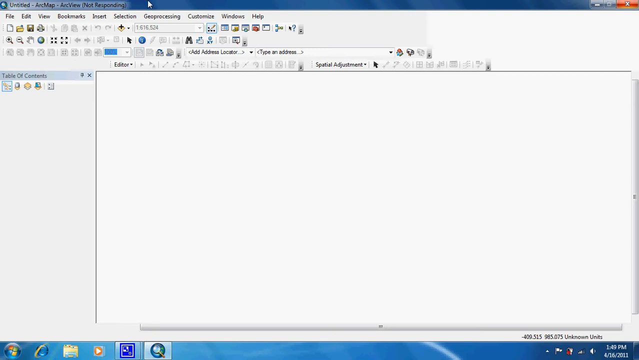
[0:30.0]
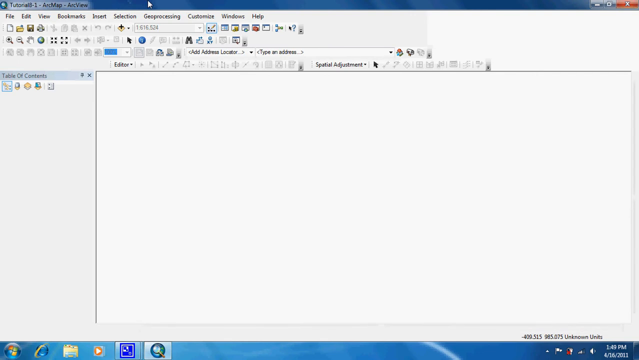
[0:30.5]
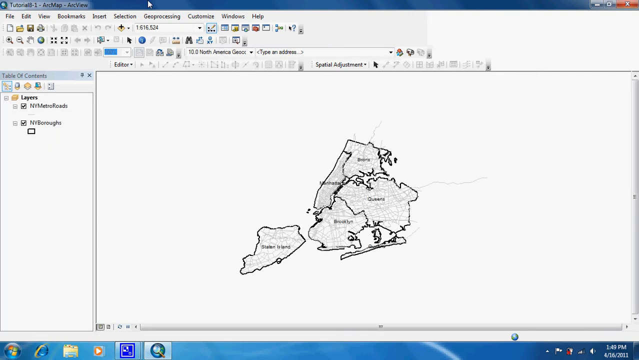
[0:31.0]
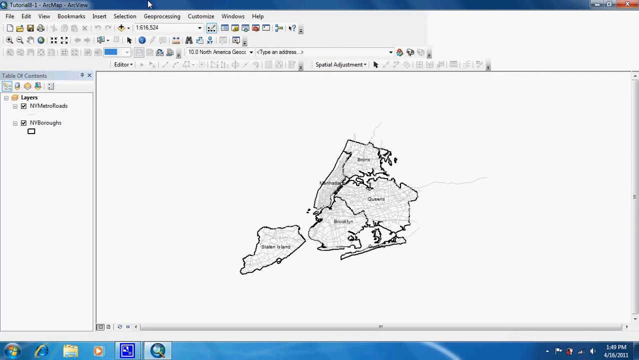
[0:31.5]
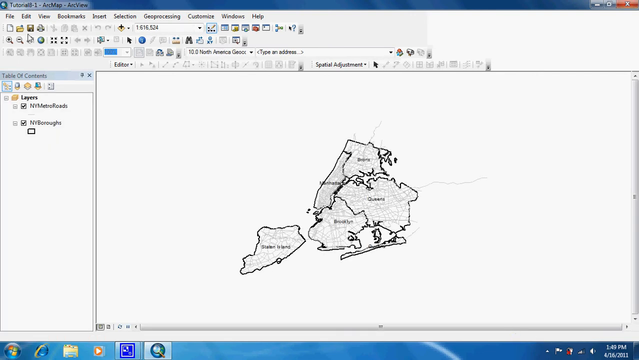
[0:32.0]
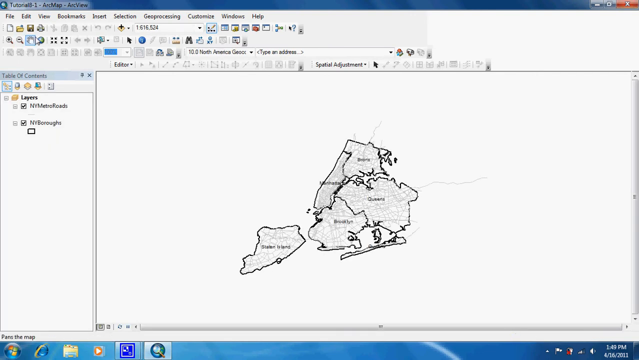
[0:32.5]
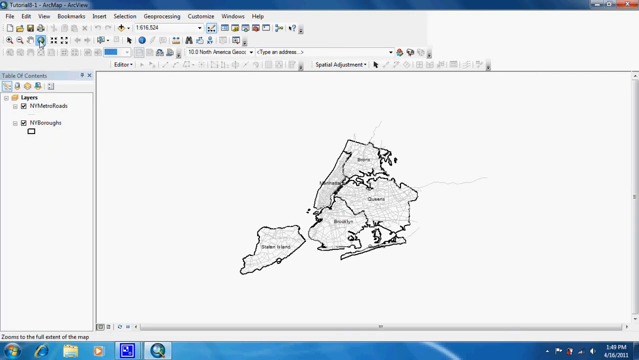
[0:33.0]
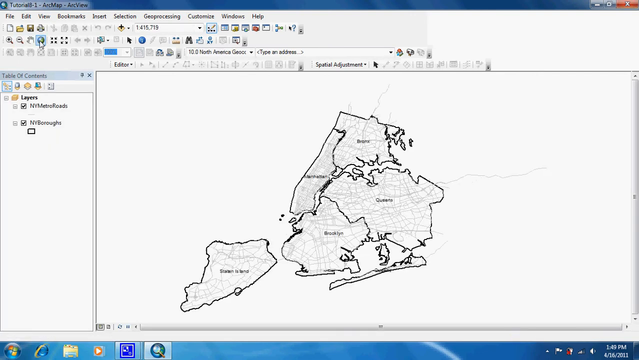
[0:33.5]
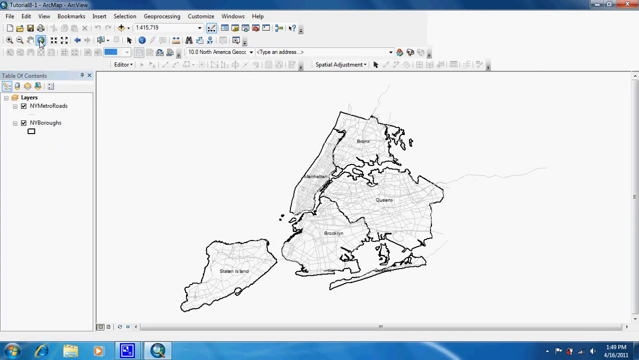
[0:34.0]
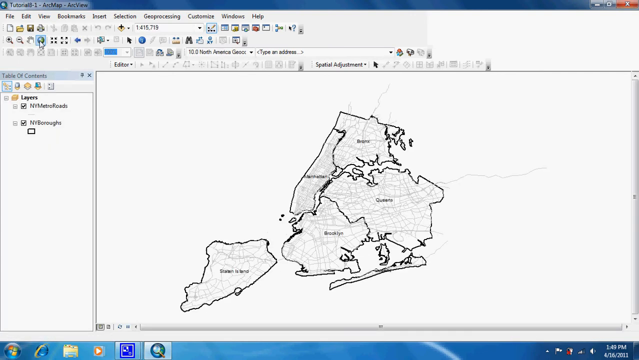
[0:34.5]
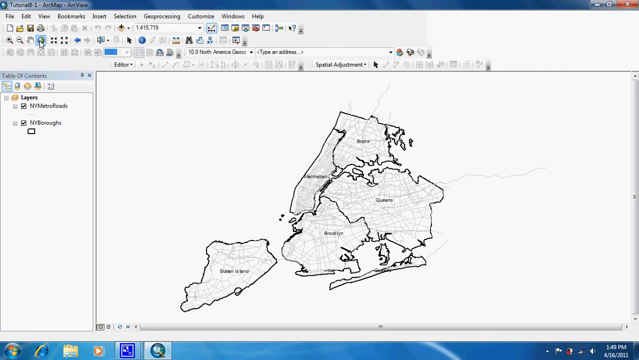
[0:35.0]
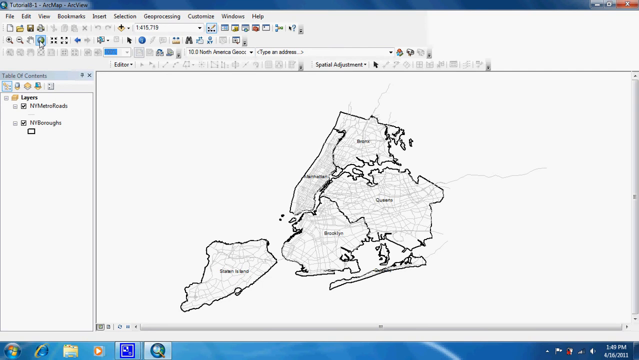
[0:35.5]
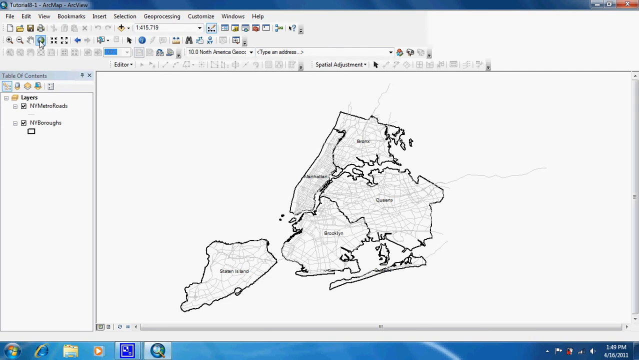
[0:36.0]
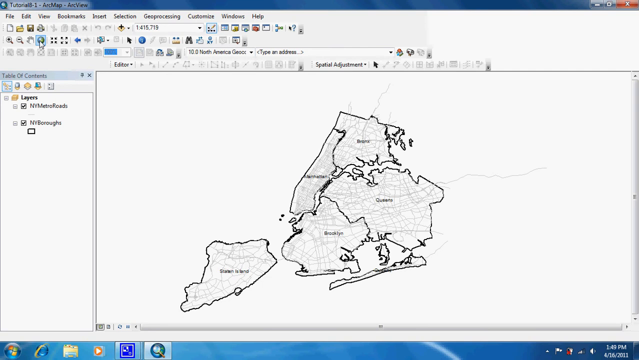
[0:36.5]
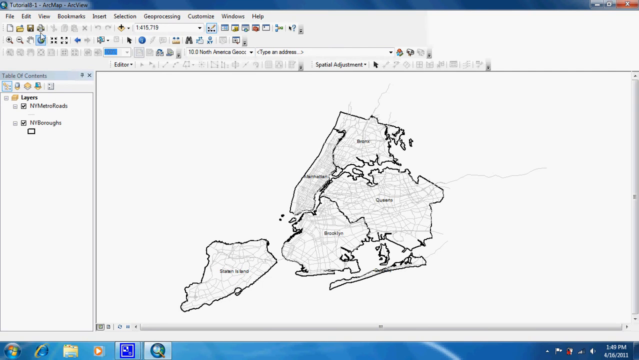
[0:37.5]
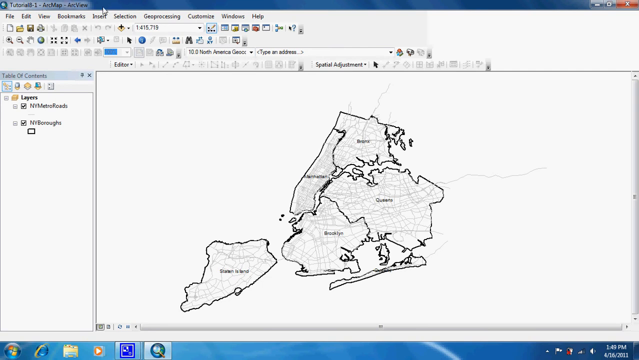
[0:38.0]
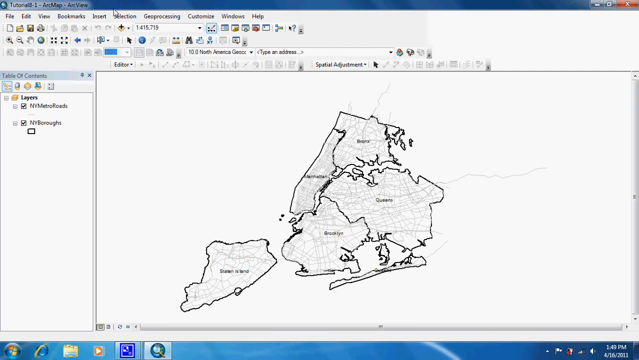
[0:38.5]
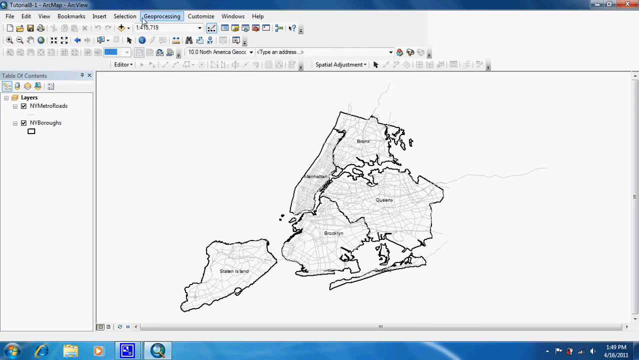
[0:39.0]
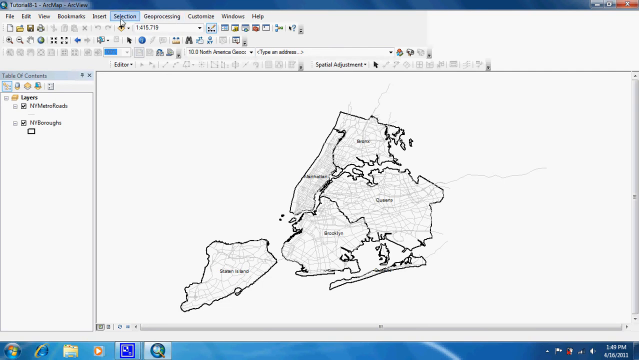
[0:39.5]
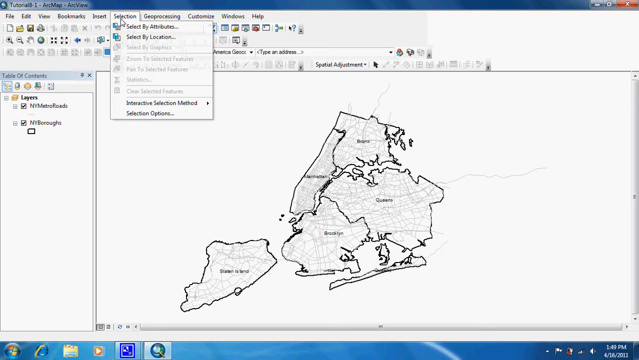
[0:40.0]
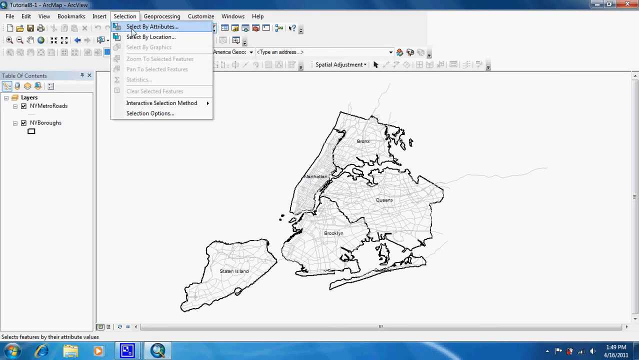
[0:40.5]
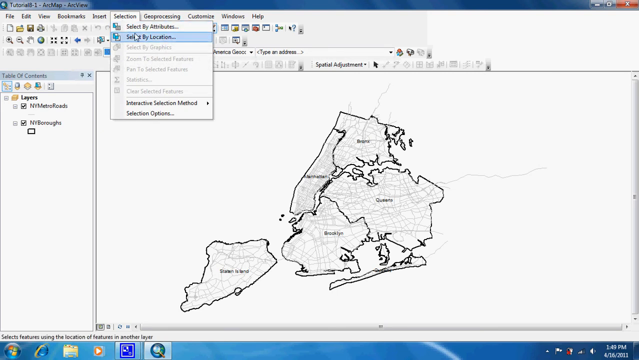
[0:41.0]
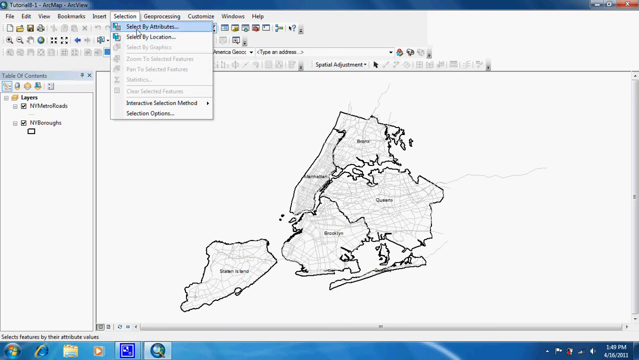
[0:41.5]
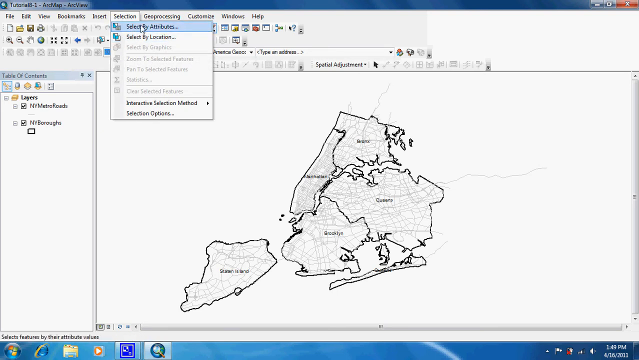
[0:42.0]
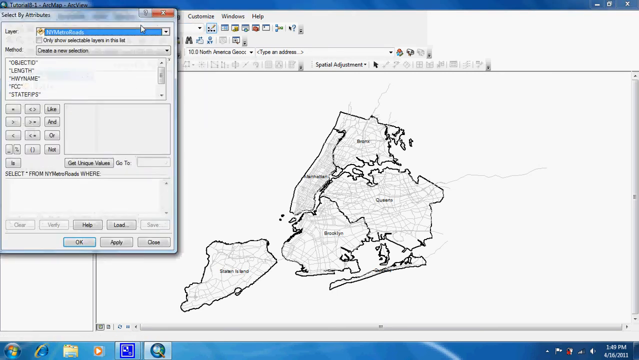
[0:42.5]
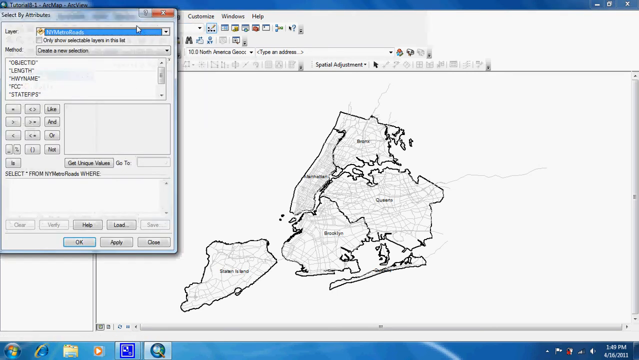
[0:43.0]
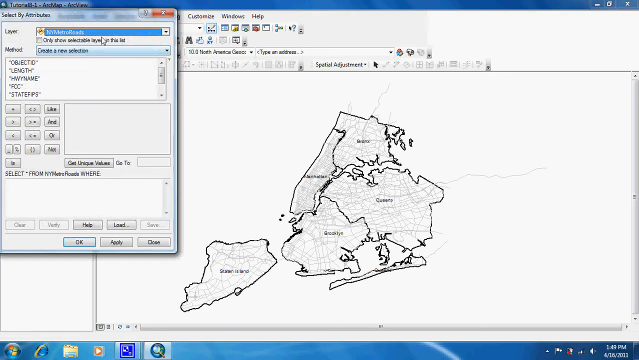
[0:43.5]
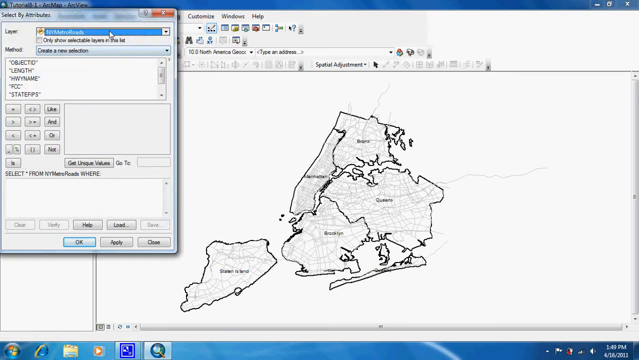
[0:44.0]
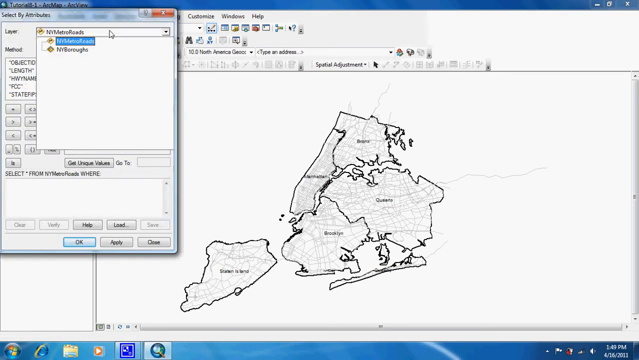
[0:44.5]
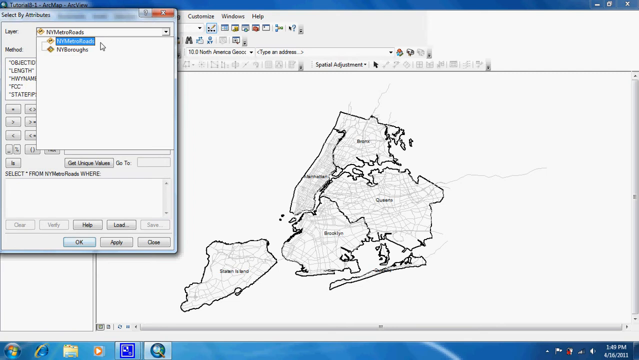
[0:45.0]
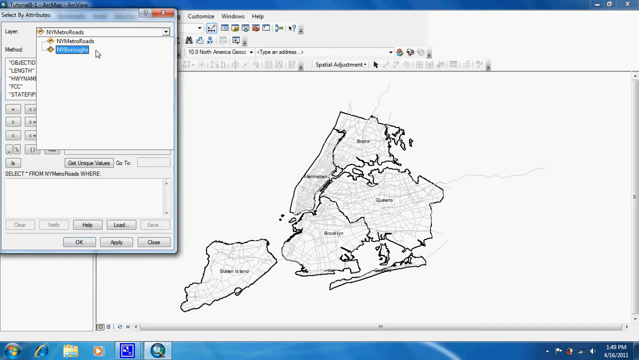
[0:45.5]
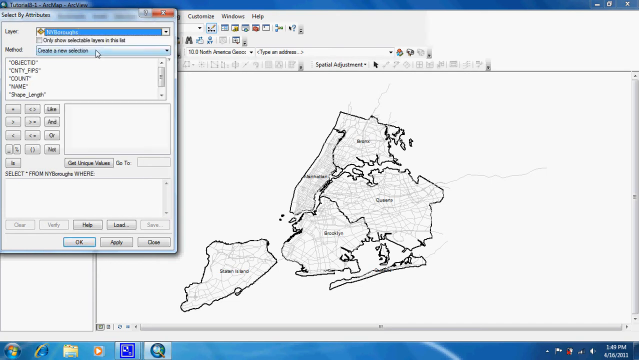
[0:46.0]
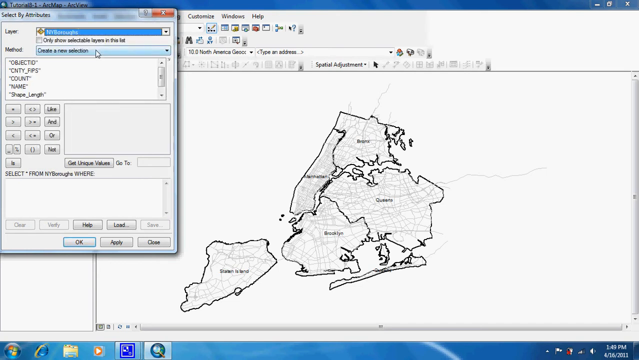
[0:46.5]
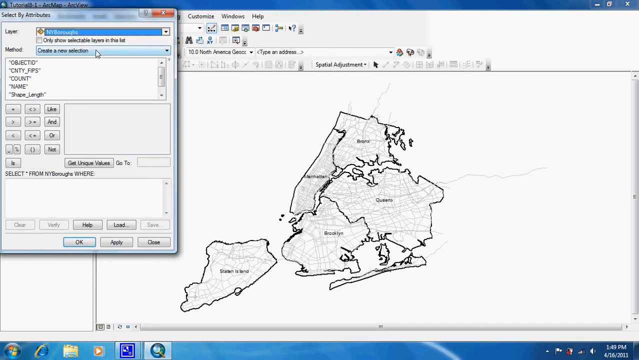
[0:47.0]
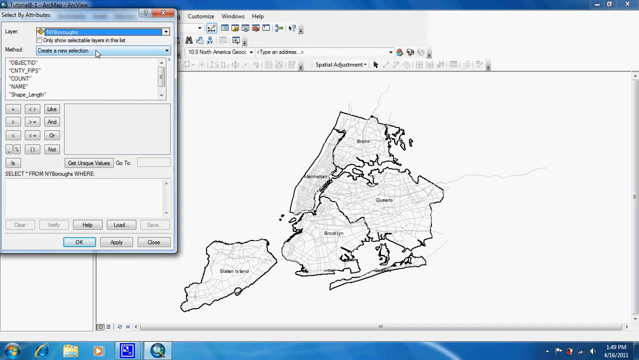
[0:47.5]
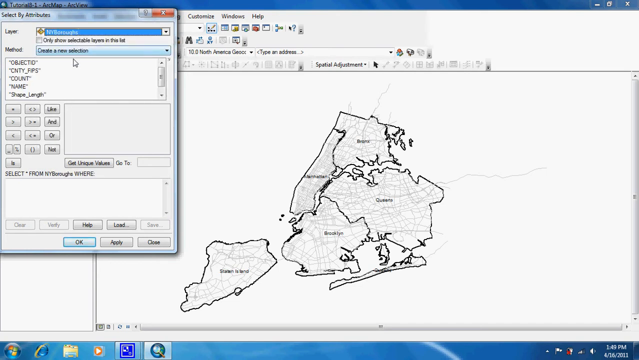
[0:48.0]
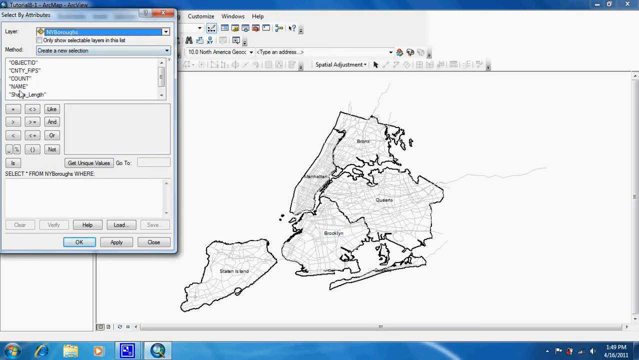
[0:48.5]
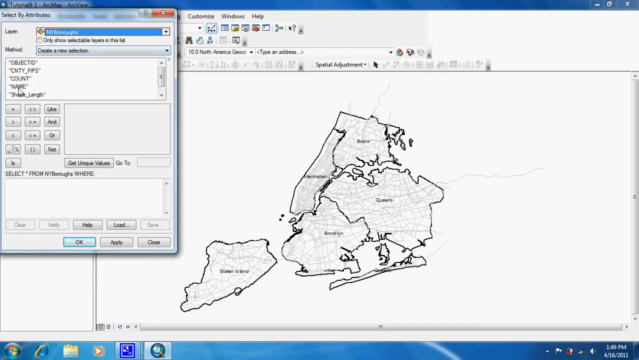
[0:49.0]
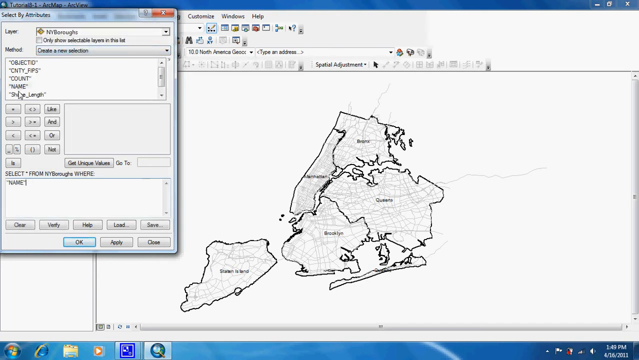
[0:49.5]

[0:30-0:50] The top menu bar reads "not responding", and eventually the file opens. The main pane of the application now shows a map of some sort. On the left-hand side is possibly the word "logos" and the word "layers", with two checkboxes labeled "NY Metro roads" and "NY boroughs". The mouse pointer clicks one of the menu options or icons at the top, then goes to the menu and selects "selection". A pop-up titled "select by attributes" appears, with layer and method options at the top and okay, apply and close buttons at the bottom. A layer apparently gets selected, and a method is selected.